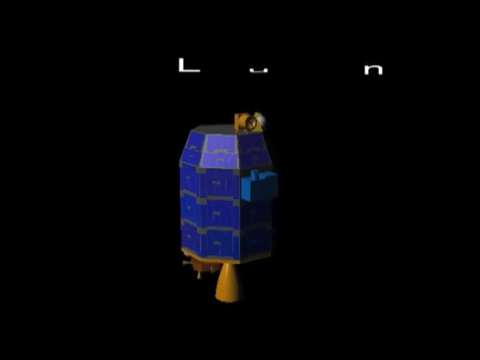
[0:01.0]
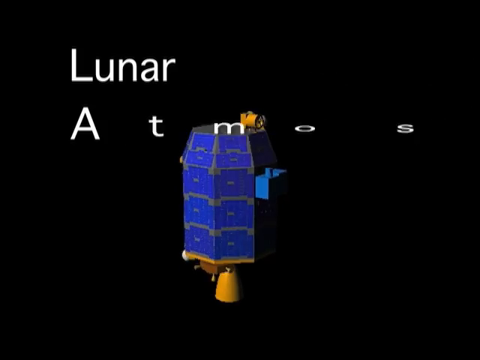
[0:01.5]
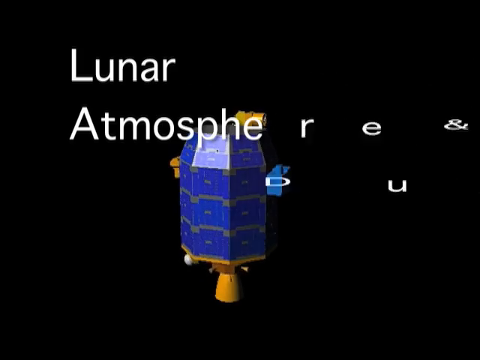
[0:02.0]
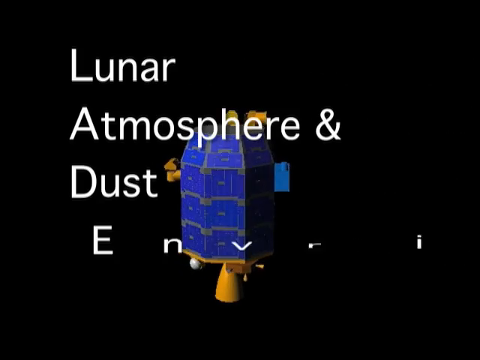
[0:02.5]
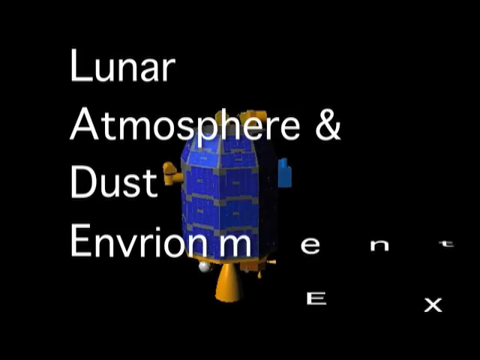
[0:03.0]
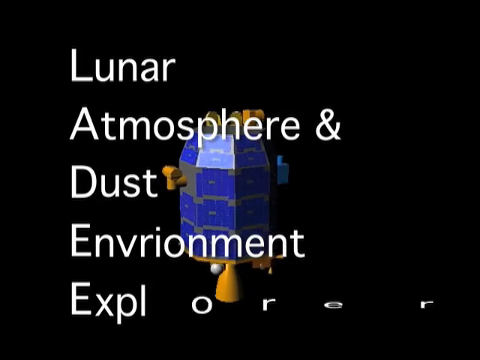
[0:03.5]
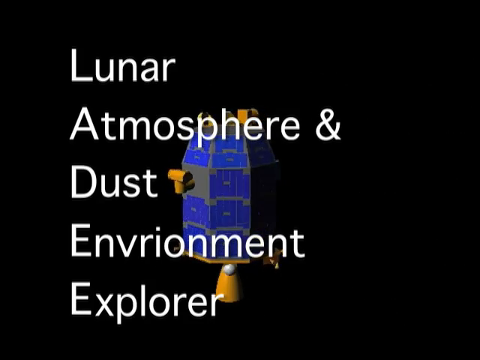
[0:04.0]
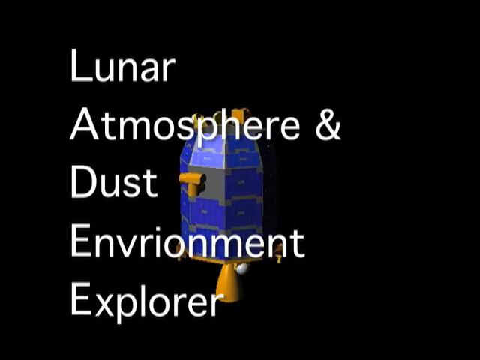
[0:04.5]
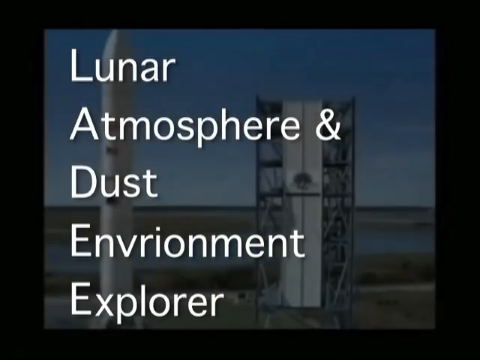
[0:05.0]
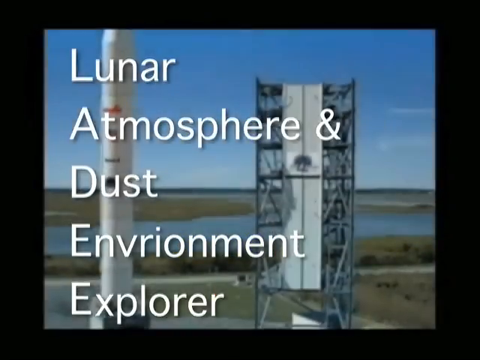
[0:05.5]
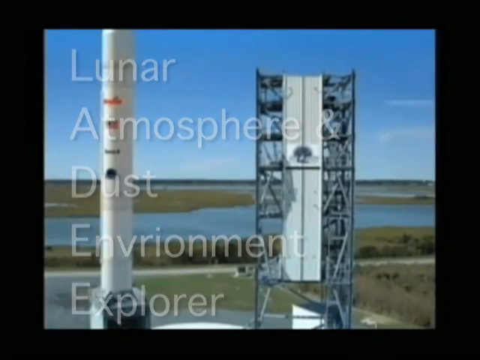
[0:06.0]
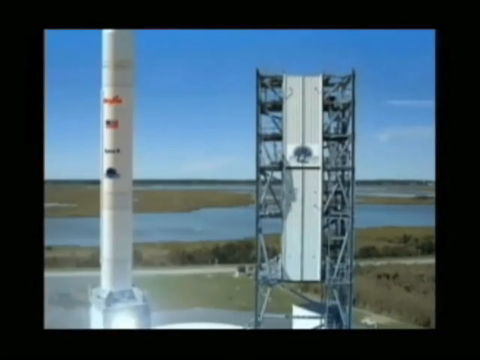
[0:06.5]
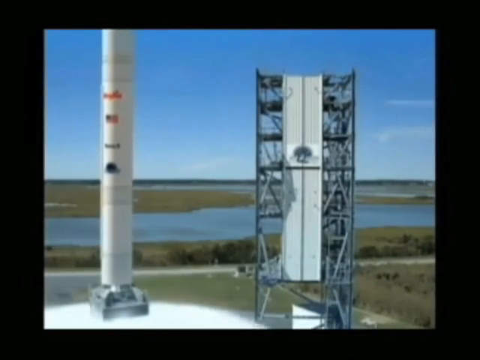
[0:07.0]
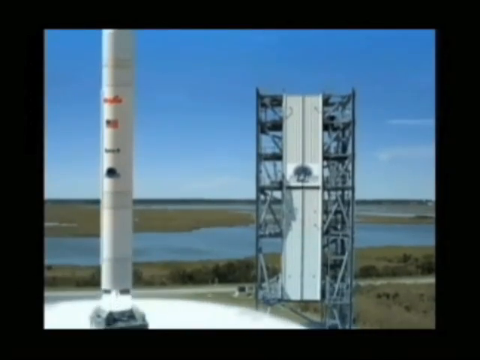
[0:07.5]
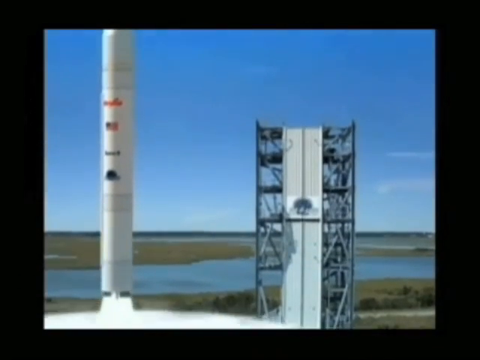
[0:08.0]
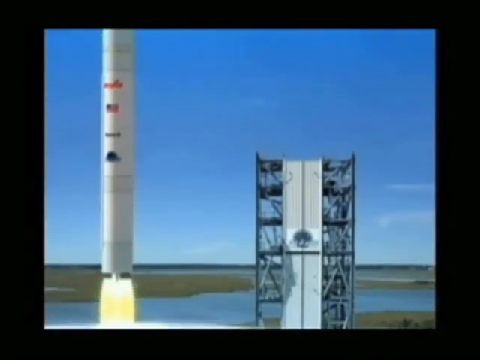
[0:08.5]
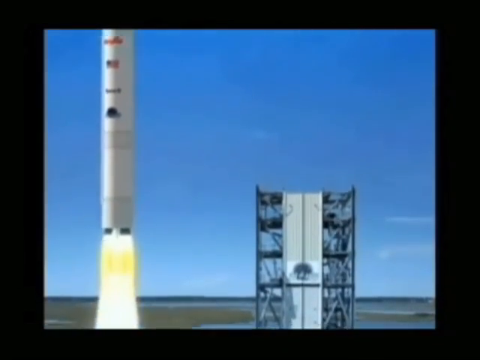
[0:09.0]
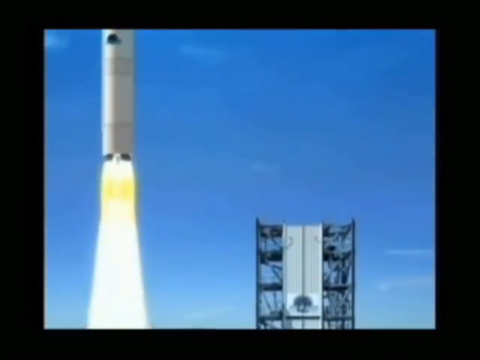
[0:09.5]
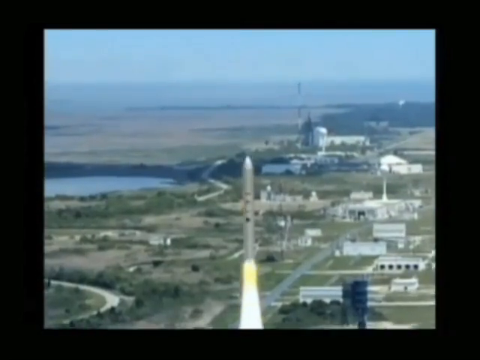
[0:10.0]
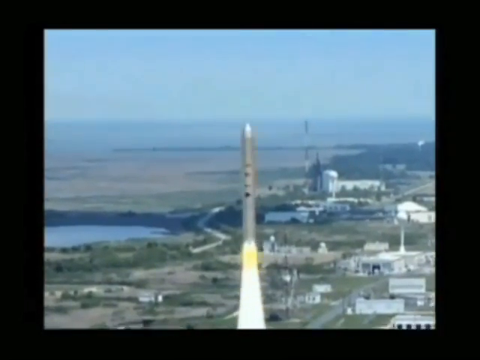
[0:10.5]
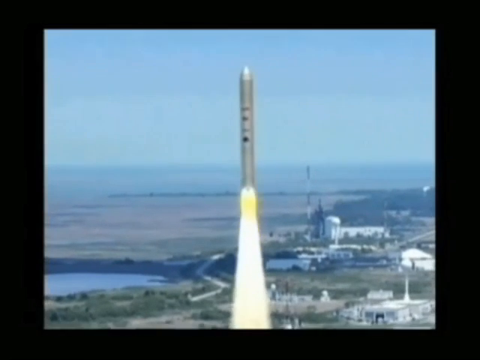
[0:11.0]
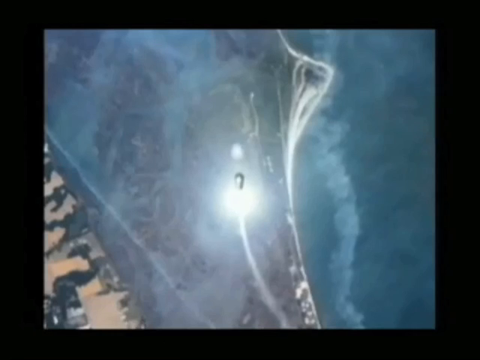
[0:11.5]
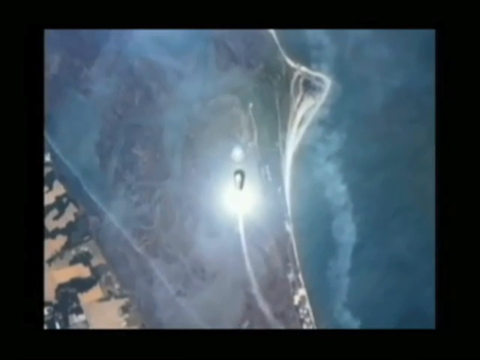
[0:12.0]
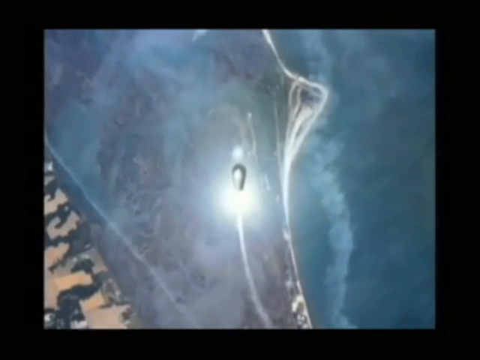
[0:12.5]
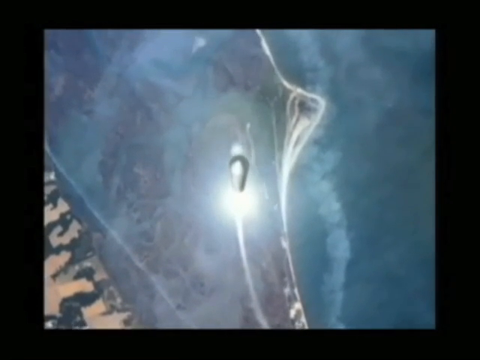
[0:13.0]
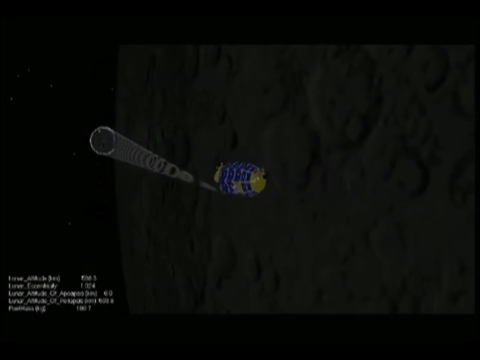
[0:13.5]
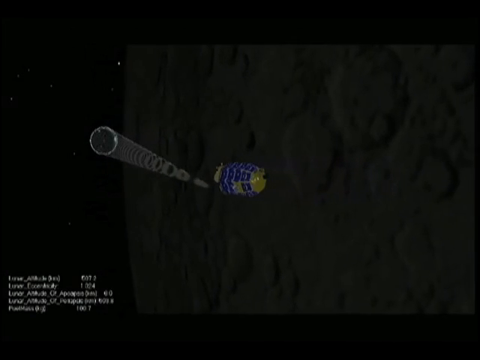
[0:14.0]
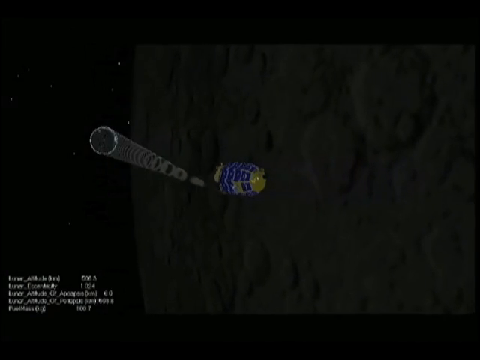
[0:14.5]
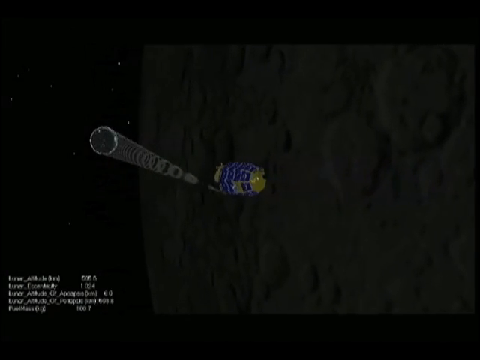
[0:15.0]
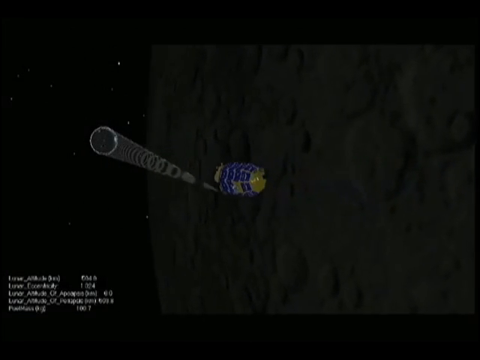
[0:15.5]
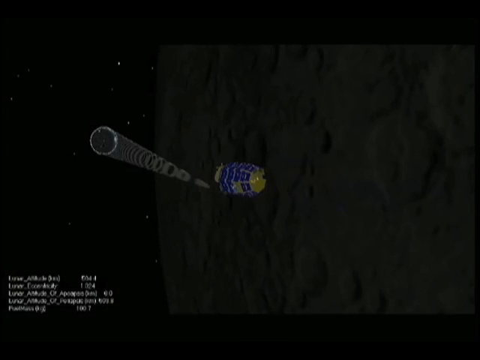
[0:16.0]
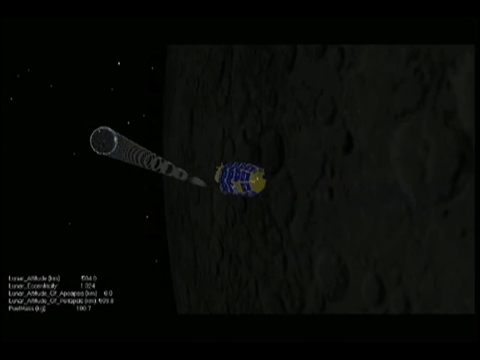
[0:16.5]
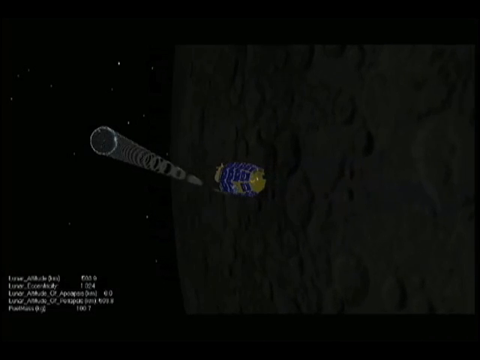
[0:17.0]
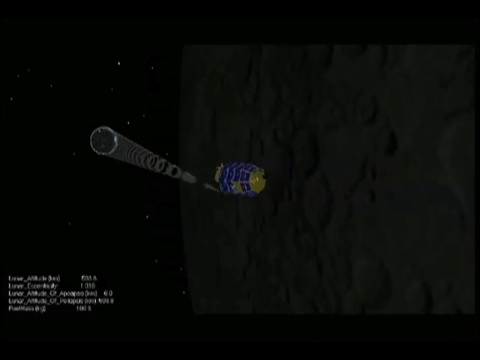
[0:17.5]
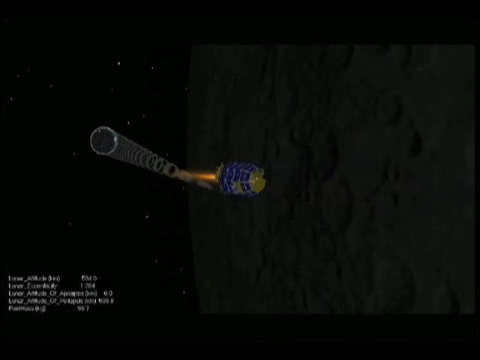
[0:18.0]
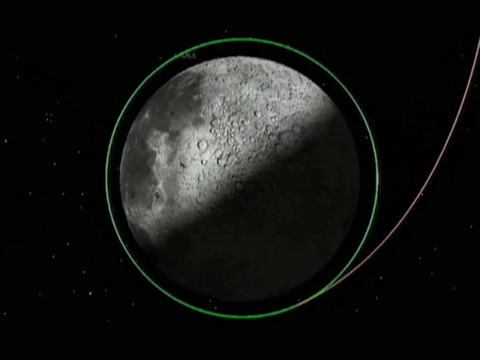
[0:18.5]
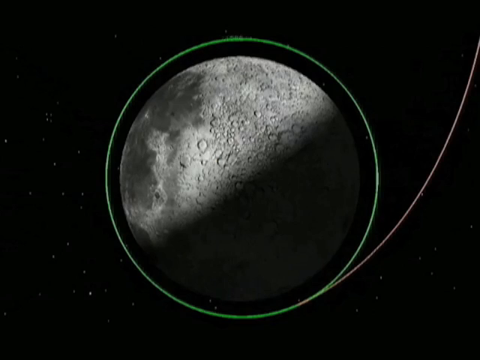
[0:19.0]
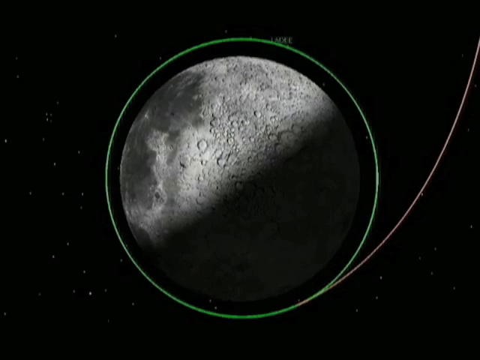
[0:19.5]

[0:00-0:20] Against a black background there is some type of spherical device. Its top and bottom are gold, and it has a narrow stand and a flat base. There is an orange spherical device on it, and it is mostly dark blue with light blue. It appears to be made up of individual compartments, and there is a gold knob on one end. The text "Lunar Atmosphere and Dust Environmental Explorer" is over it. The scene then switches to what looks like a cartoonish image of a space rocket taking off. There is some type of building made out of metal, and there is marshland. The spaceship takes off, its flames are visible, and it goes up into the sky. An aerial view follows, then some type of view from outer space, possibly of a space station. It then appears to show the moon with a green circle around it.